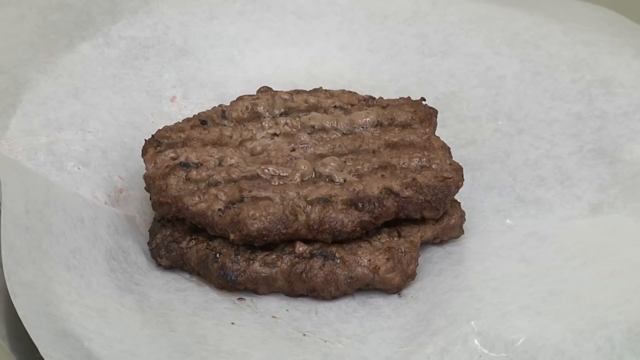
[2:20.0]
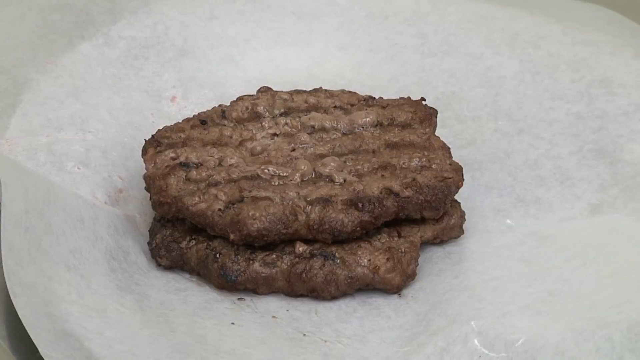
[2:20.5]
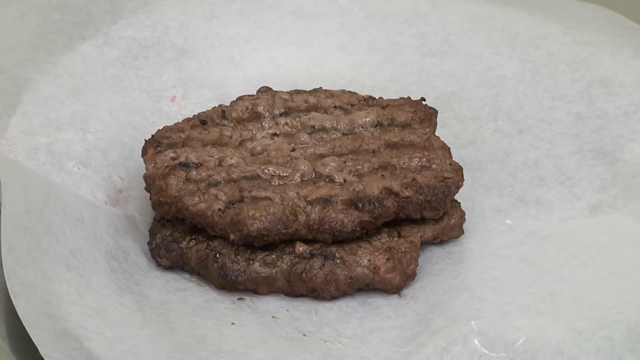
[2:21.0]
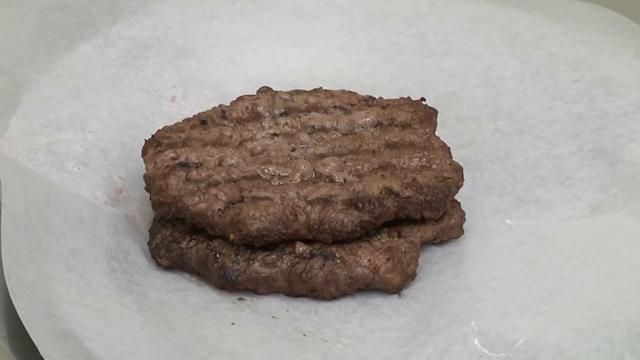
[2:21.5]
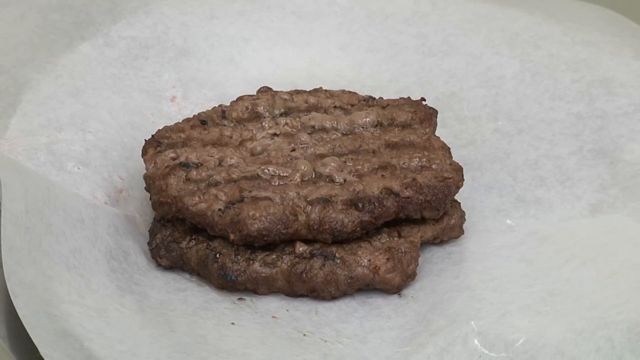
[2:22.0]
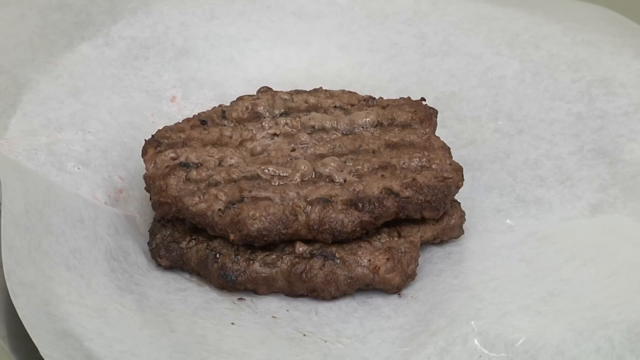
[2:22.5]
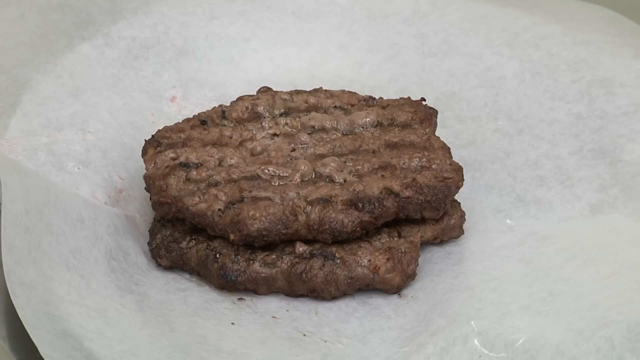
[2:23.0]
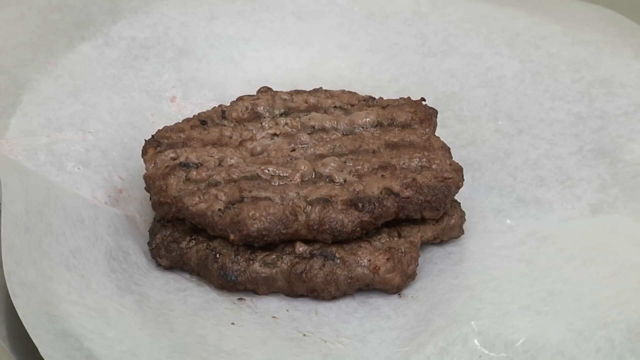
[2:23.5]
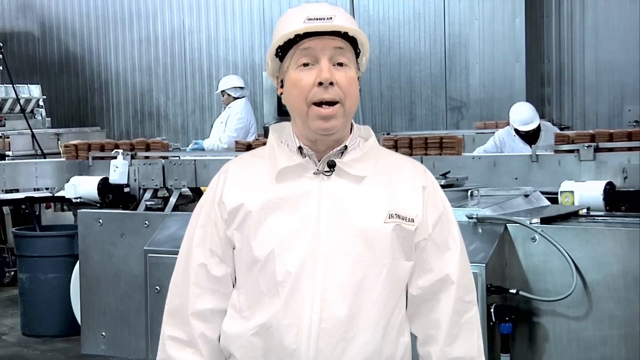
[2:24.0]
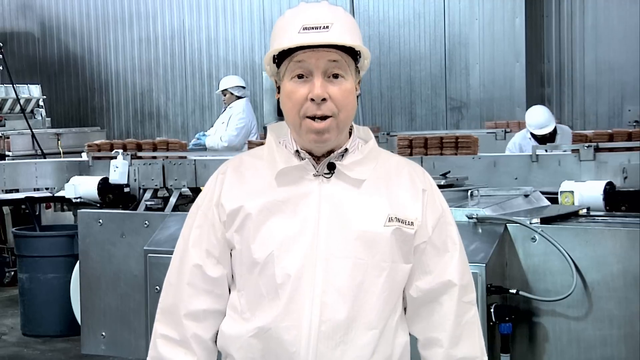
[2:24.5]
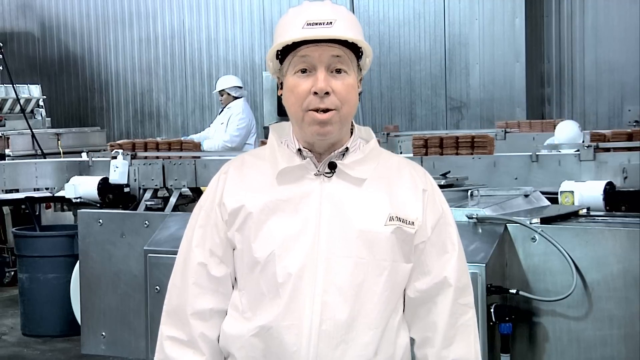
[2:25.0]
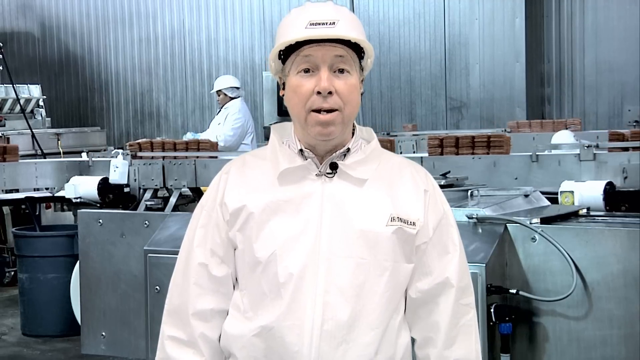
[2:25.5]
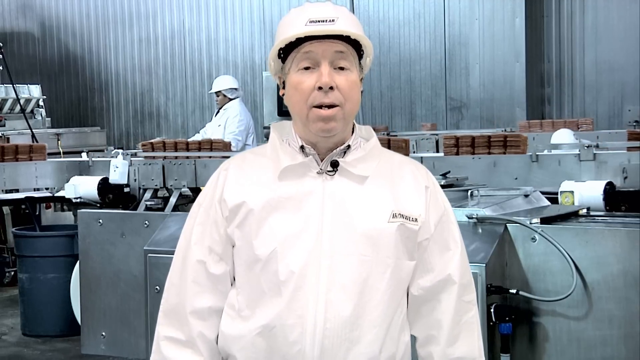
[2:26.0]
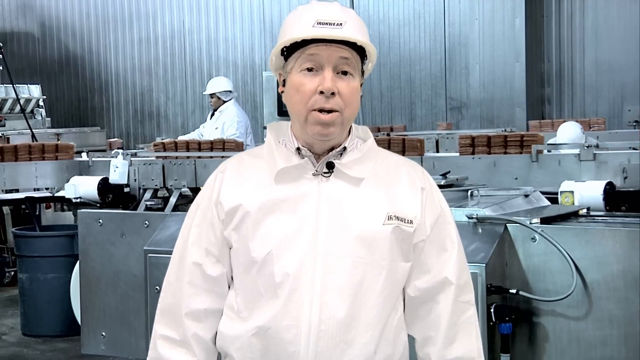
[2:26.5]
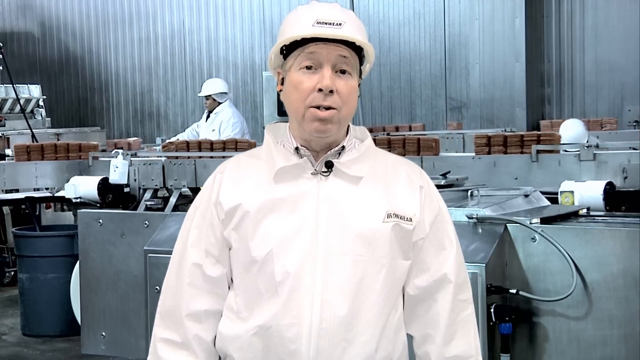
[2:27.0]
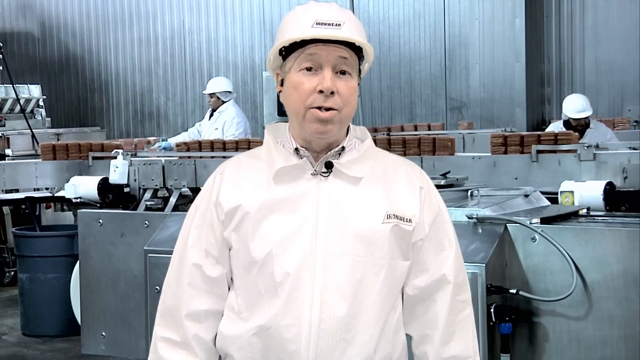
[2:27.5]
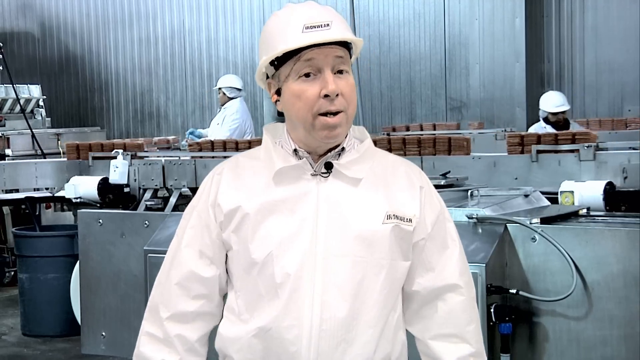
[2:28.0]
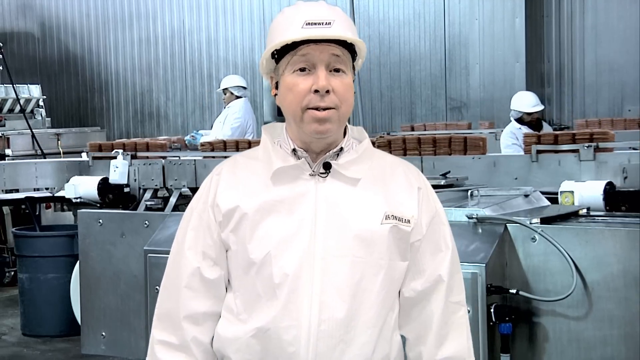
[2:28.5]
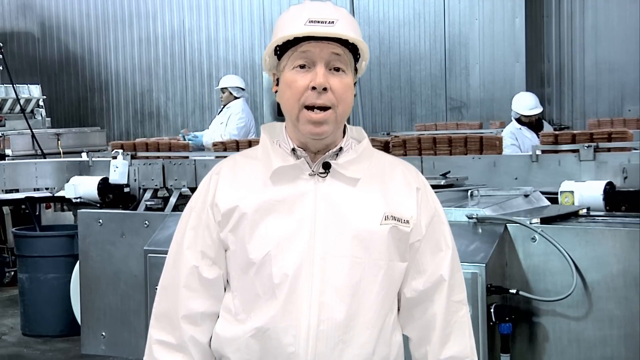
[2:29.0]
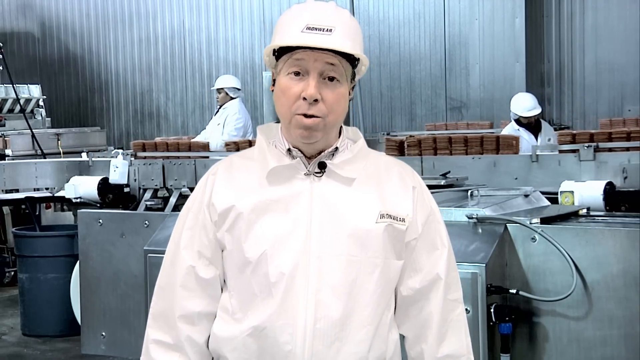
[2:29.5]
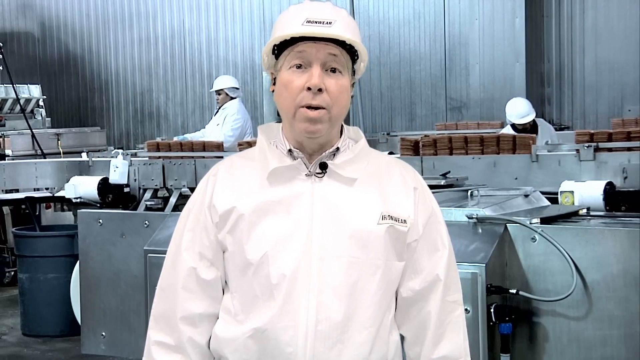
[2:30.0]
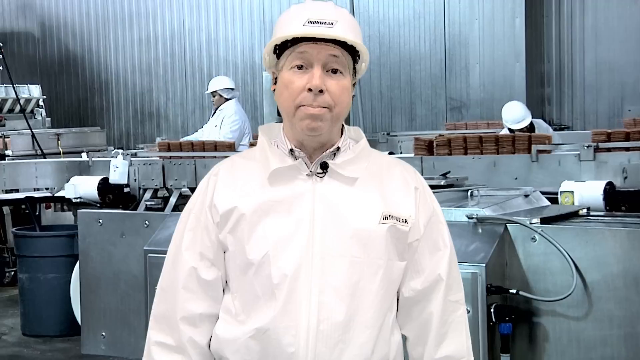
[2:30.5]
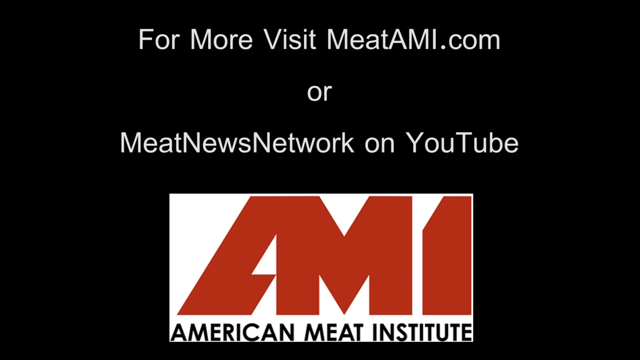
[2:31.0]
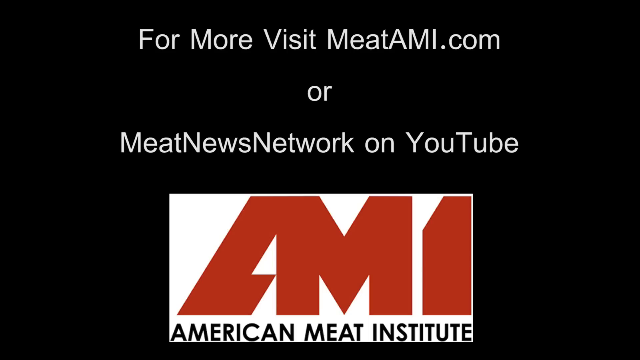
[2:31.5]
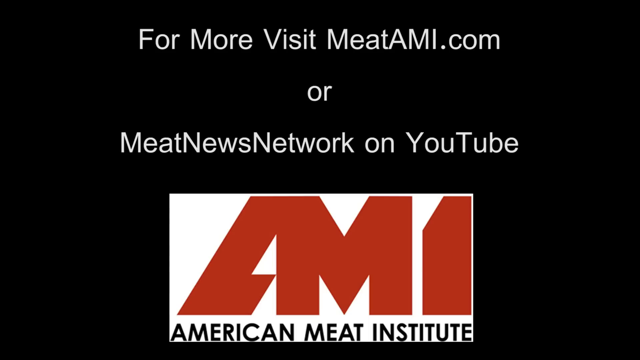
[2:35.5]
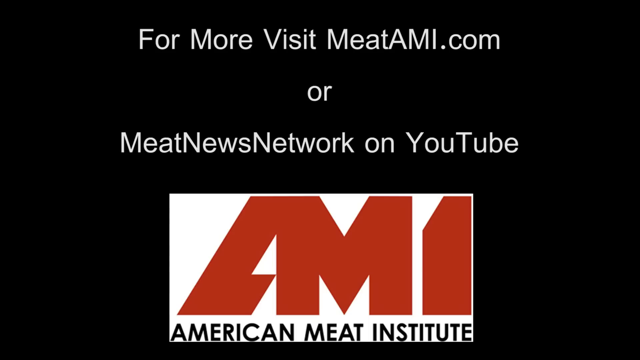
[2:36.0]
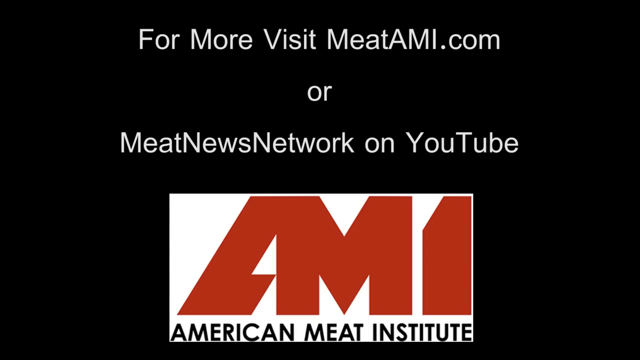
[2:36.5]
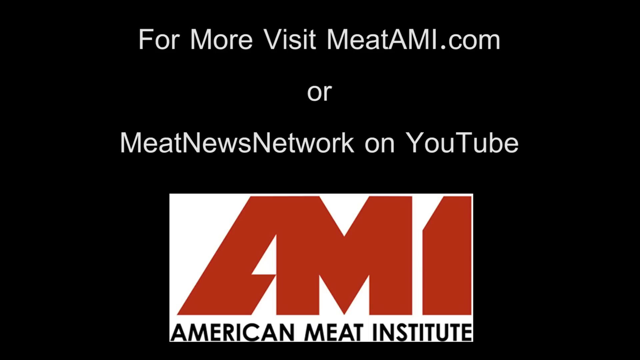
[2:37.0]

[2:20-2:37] The man from the beginning is talking while the two people in the back are still working, probably inspecting or packing the meat, which already looks like it is in patties. He shows the finished product, a cooked meat patty. The video ends with more words on the screen pointing to meatami.com, YouTube videos and the American Meat Institute.